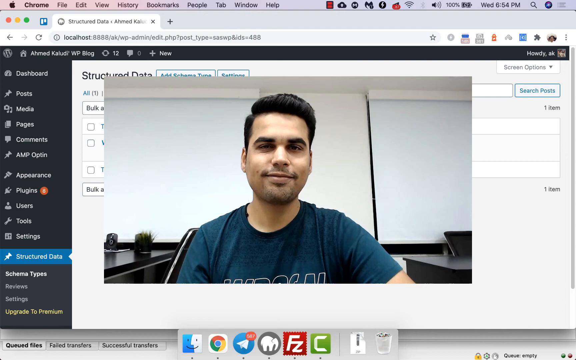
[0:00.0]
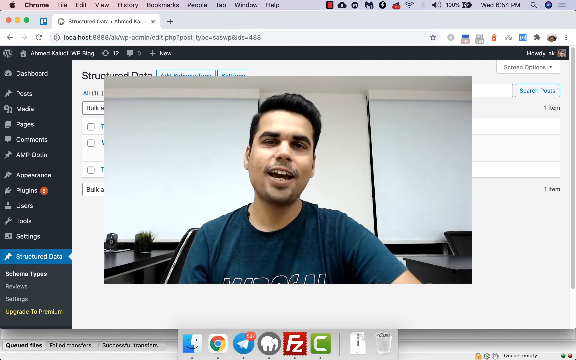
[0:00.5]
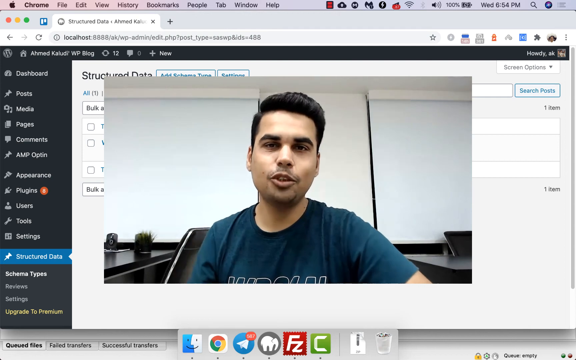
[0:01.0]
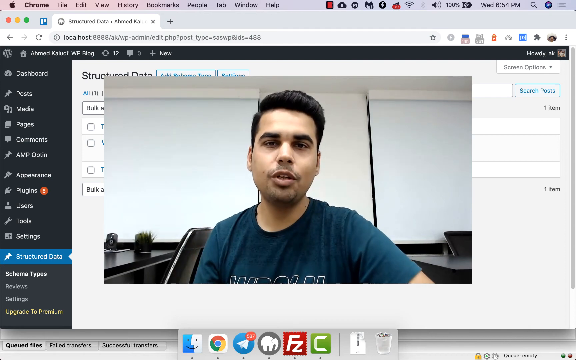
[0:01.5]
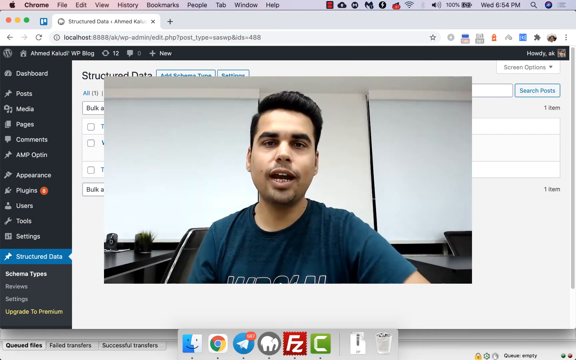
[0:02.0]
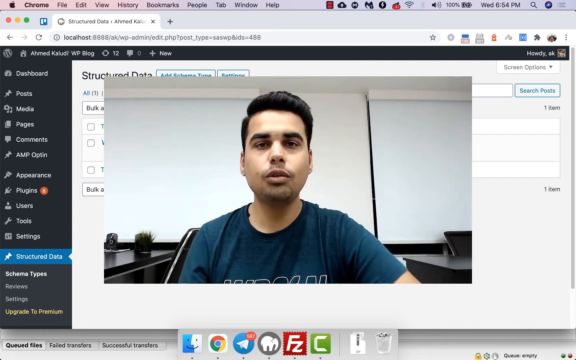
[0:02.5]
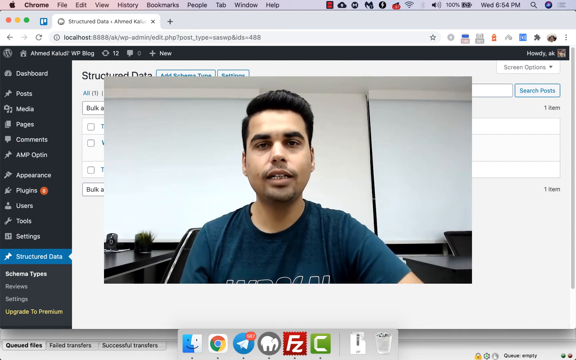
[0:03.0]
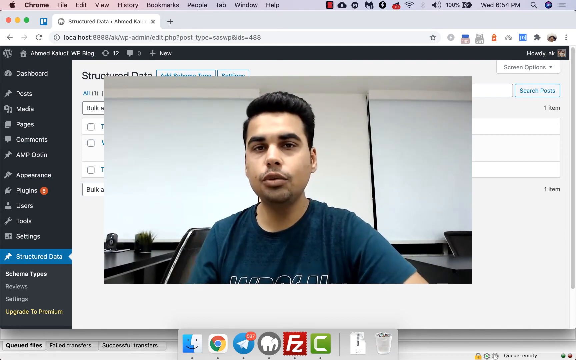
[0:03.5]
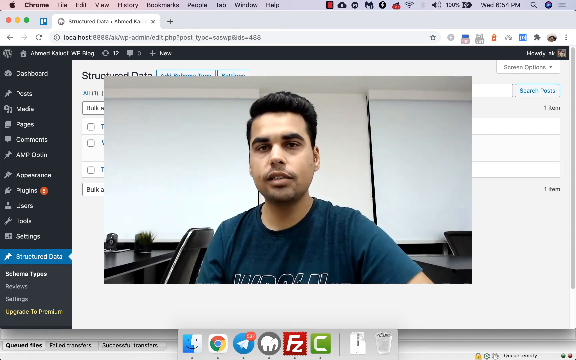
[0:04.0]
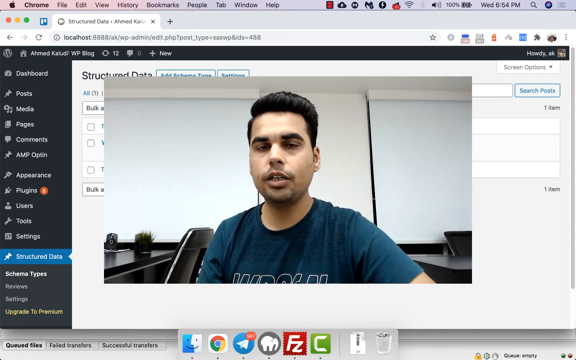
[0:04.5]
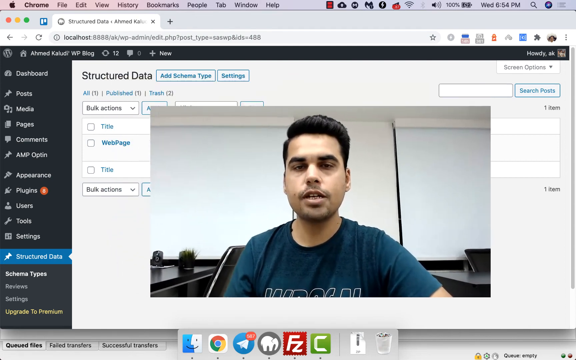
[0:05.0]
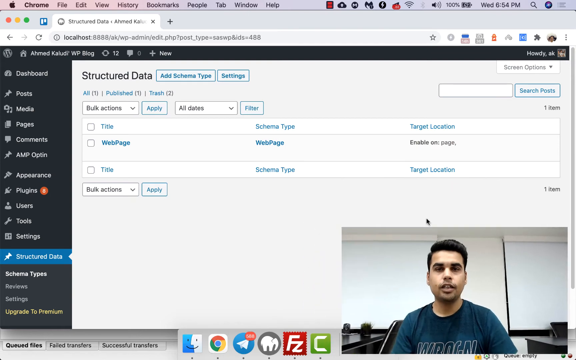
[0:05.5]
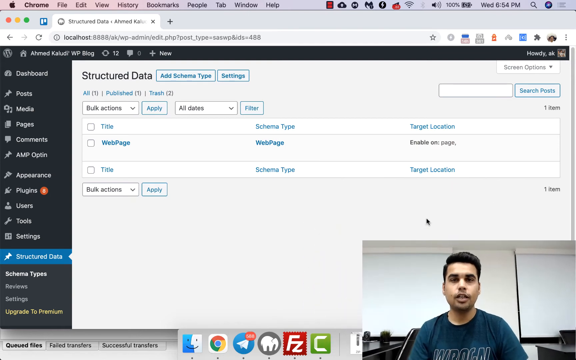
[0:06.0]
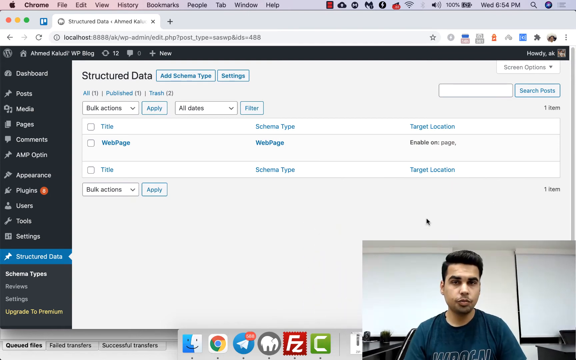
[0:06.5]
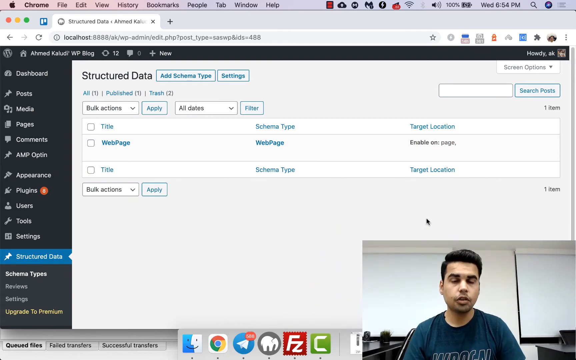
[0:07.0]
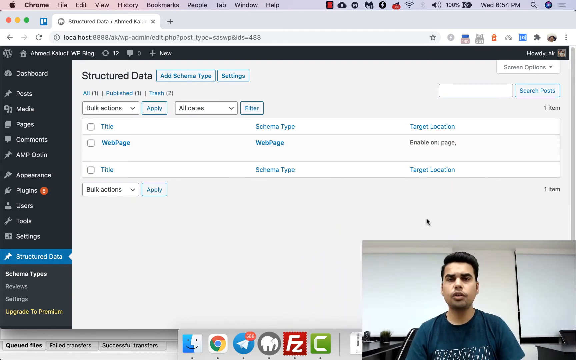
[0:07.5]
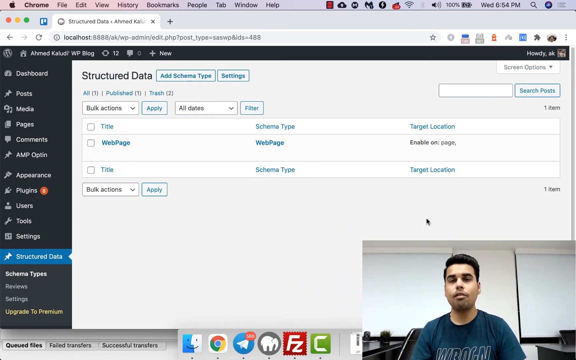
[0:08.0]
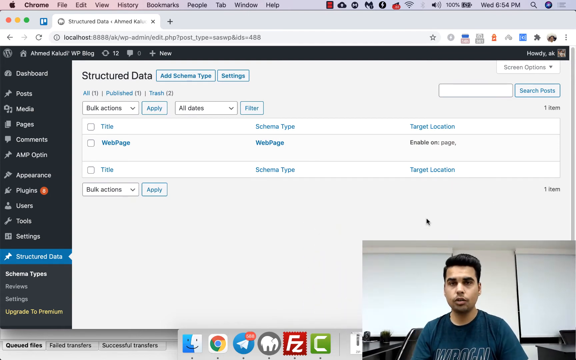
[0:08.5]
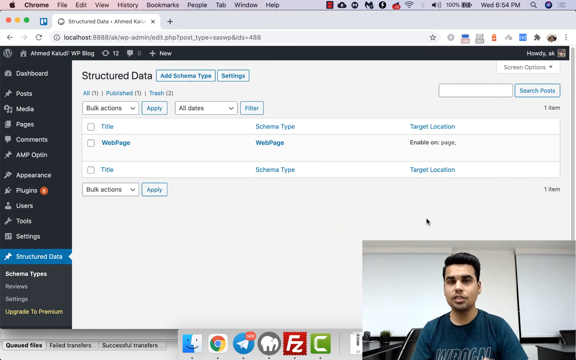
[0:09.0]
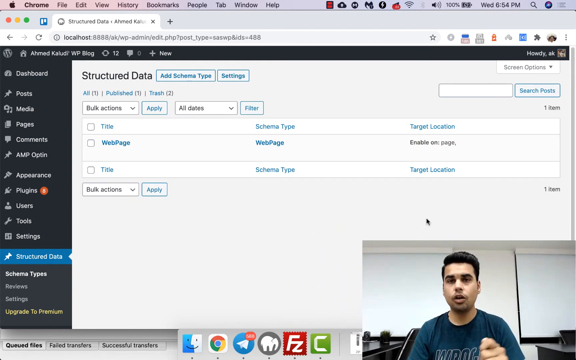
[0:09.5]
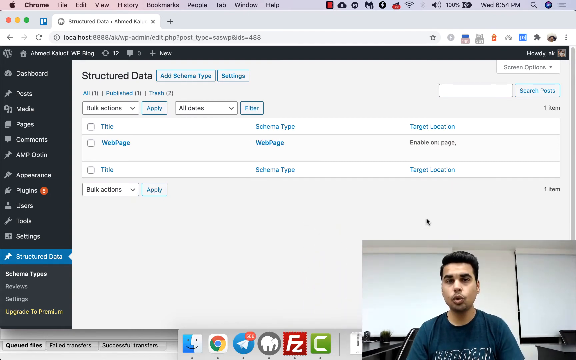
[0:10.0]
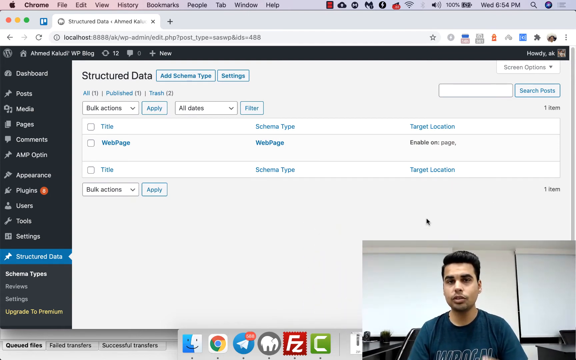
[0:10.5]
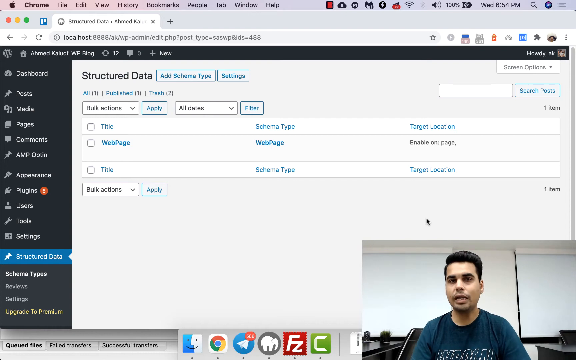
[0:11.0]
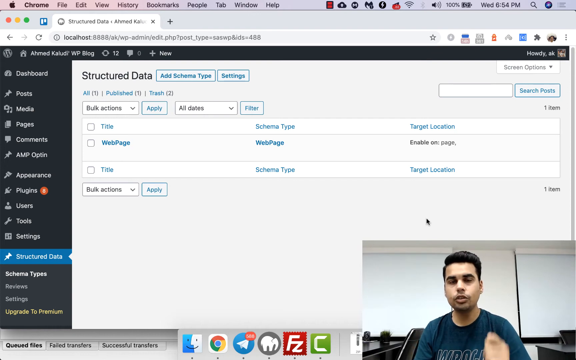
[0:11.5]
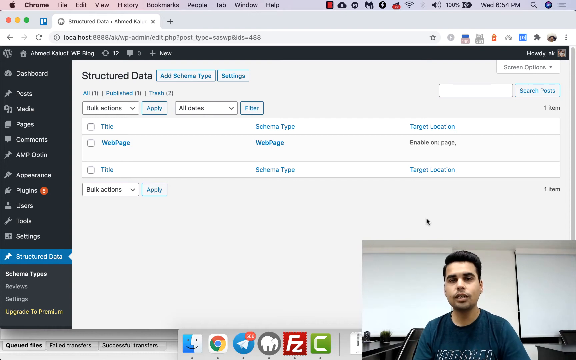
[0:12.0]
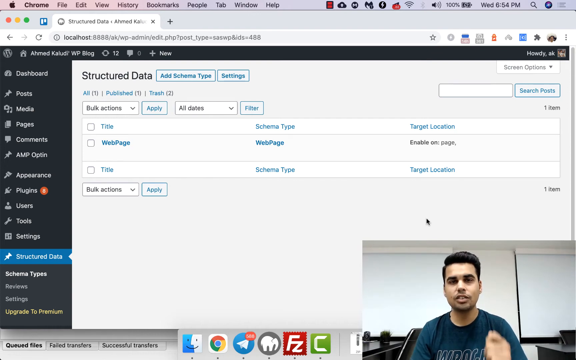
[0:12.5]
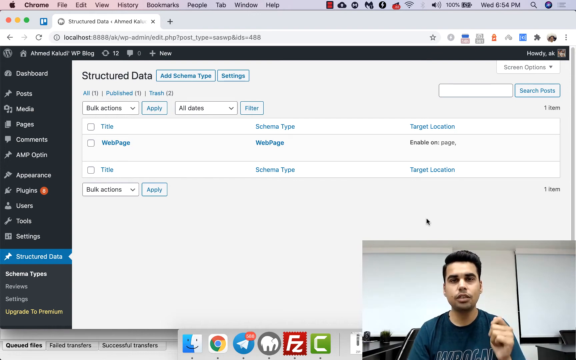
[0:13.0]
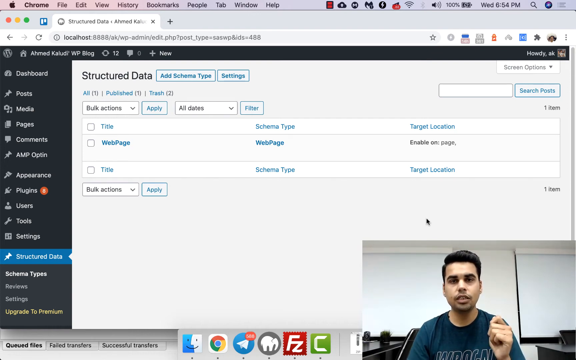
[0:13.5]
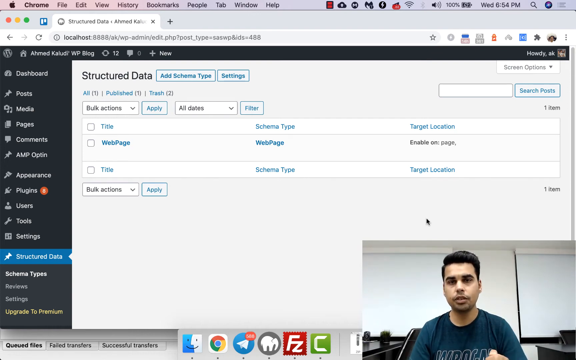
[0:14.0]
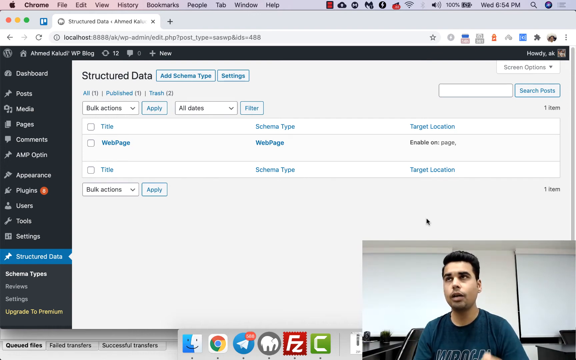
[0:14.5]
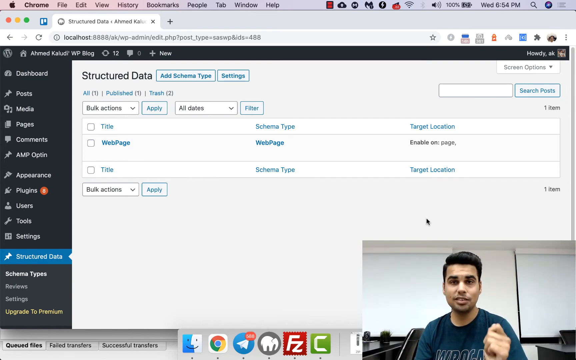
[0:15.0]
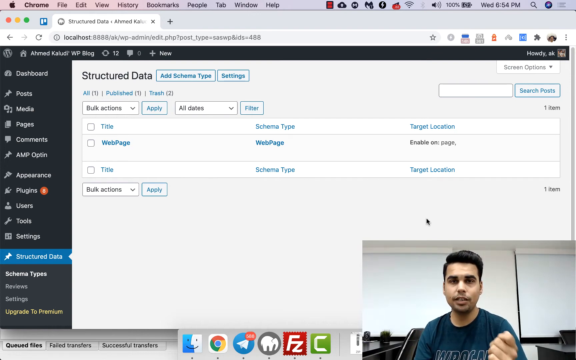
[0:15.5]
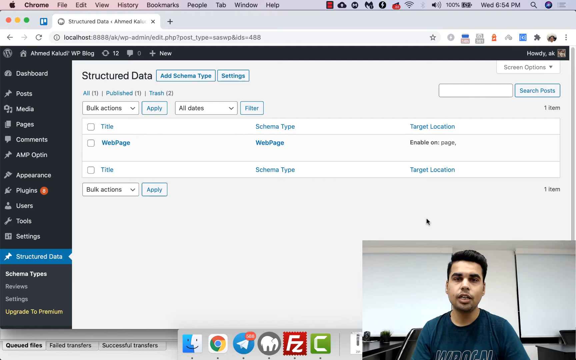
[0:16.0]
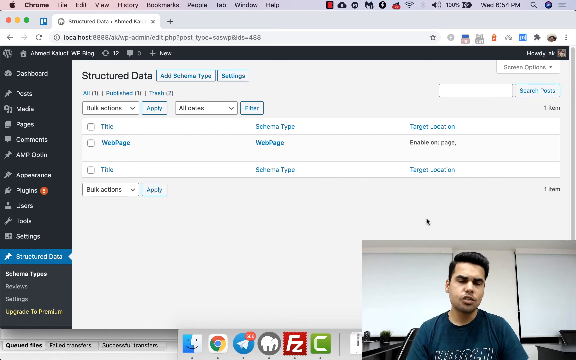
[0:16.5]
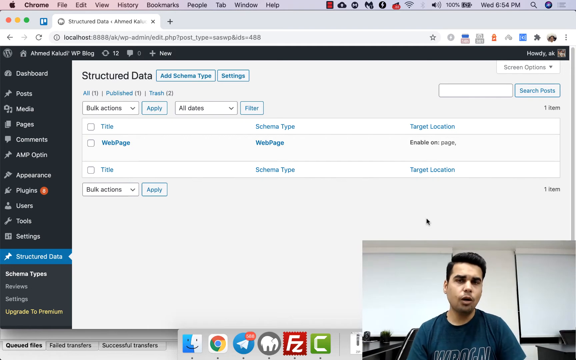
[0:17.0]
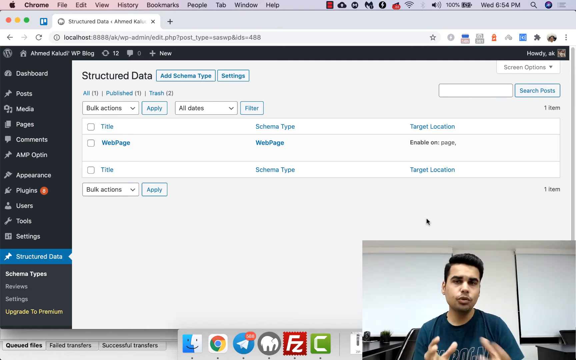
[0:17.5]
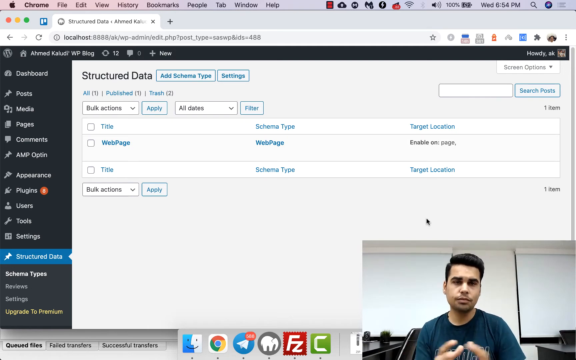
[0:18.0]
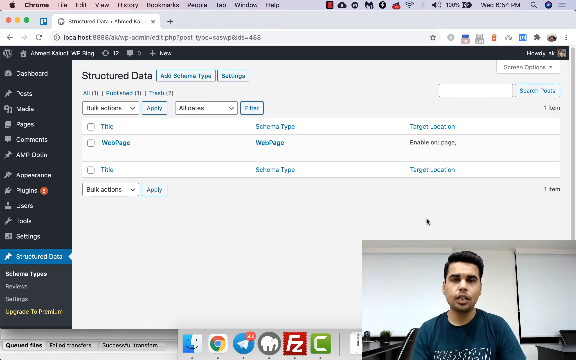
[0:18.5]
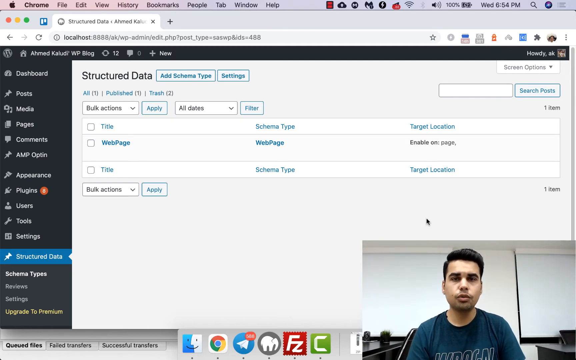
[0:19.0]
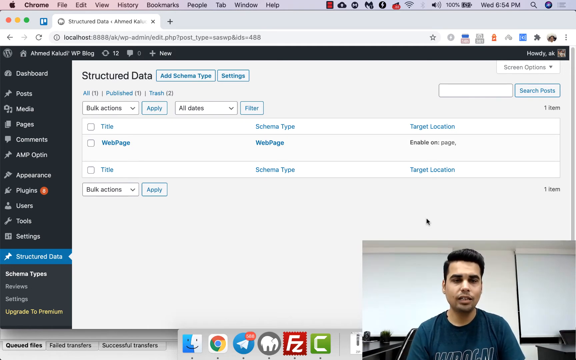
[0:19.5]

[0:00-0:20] The video begins with a website that is locally hosted on a laptop running macOS. Overlaid on top of the screen recording is a video of a man in a blue t-shirt, in what may be an office setting, who speaks to the camera. The overlaid video then moves to the bottom right of the shot and is made smaller so the screen recording can be seen. The screen shows a dashboard, and the page open in the dashboard is the structured data page. It lists a web page and a title in the database, along with a type and a target location. The person's name is Ahmed. The time is almost 7 p.m., and the web page is open in Google Chrome.